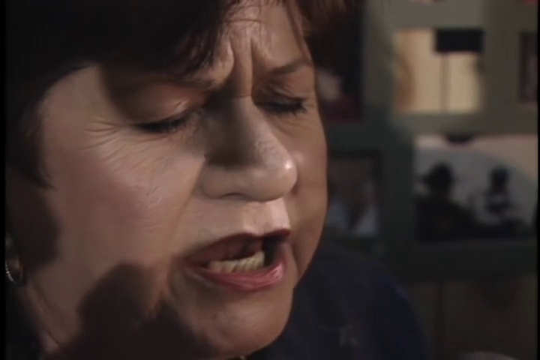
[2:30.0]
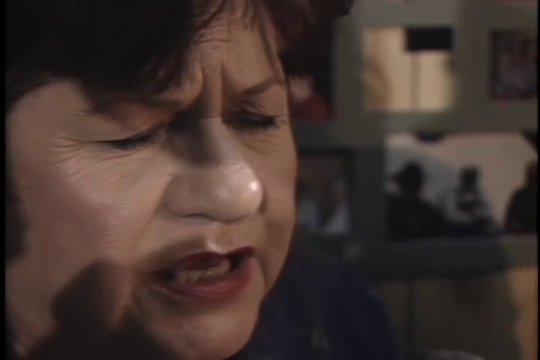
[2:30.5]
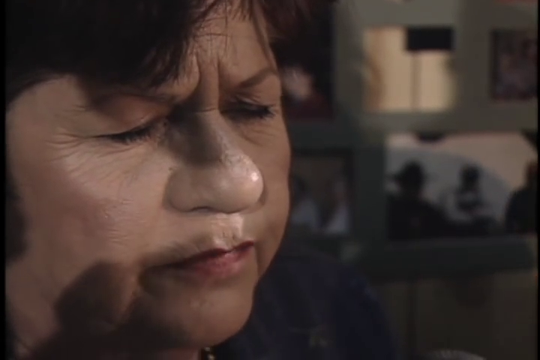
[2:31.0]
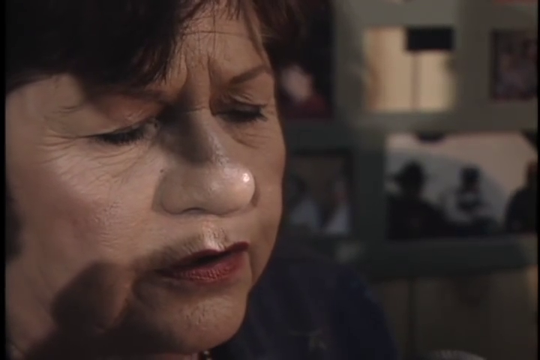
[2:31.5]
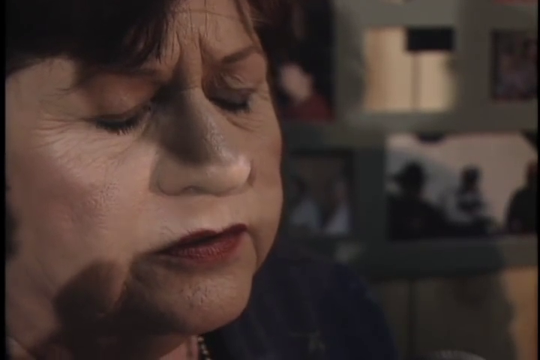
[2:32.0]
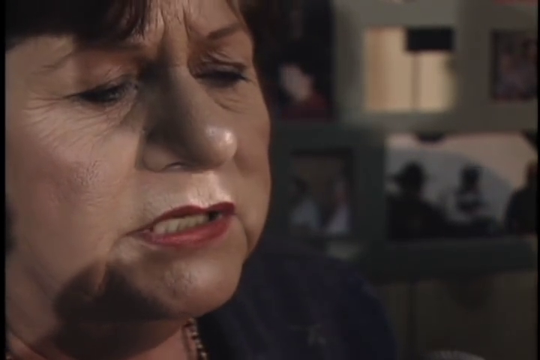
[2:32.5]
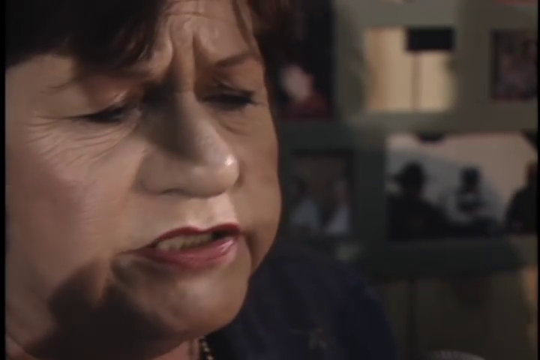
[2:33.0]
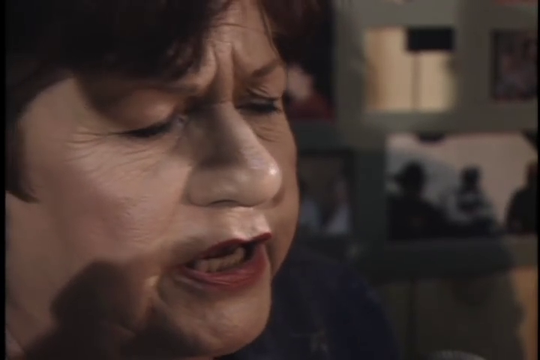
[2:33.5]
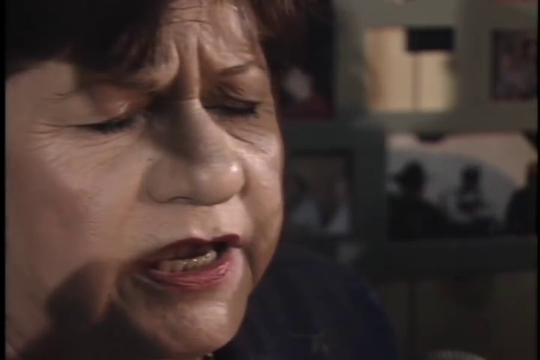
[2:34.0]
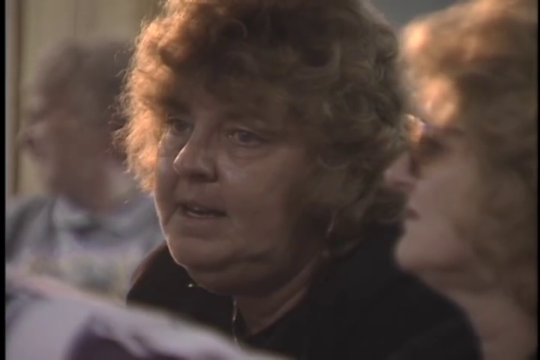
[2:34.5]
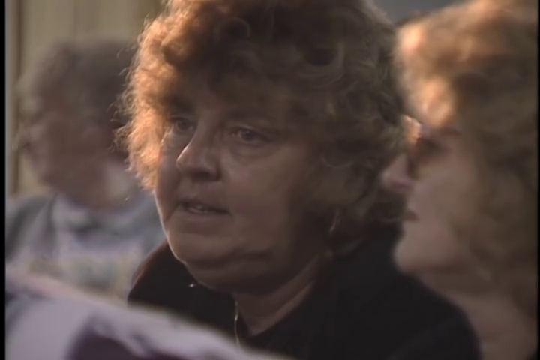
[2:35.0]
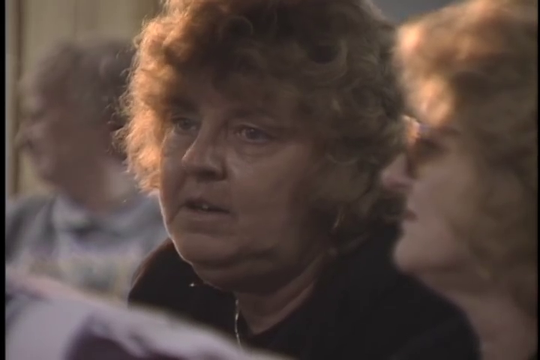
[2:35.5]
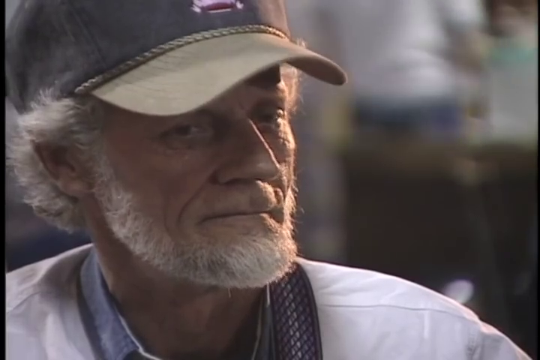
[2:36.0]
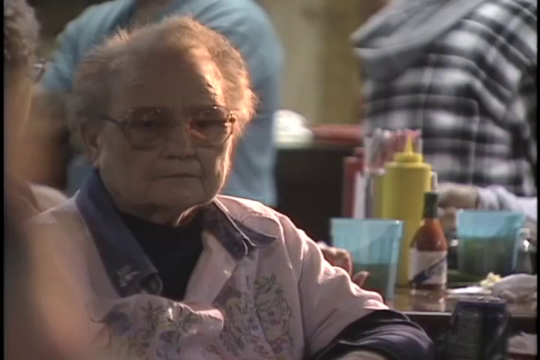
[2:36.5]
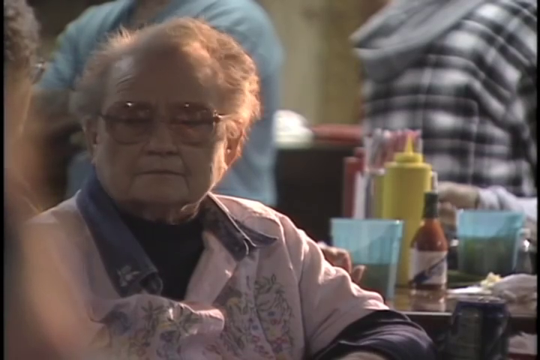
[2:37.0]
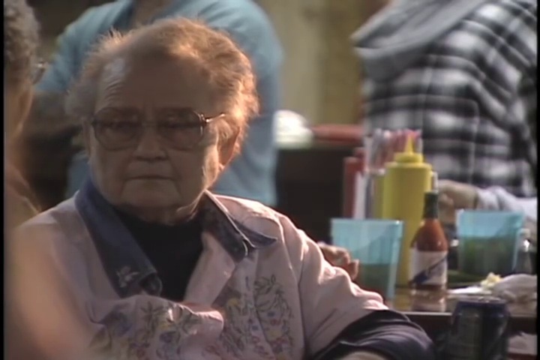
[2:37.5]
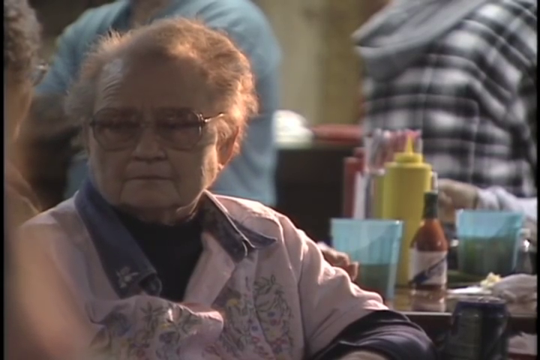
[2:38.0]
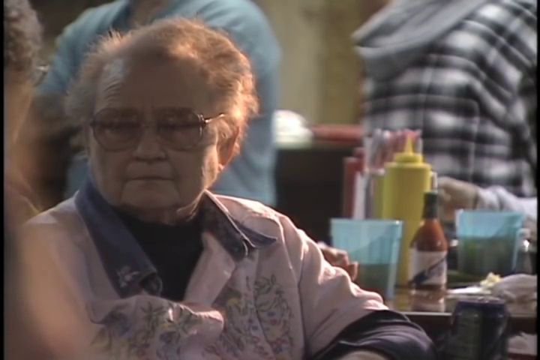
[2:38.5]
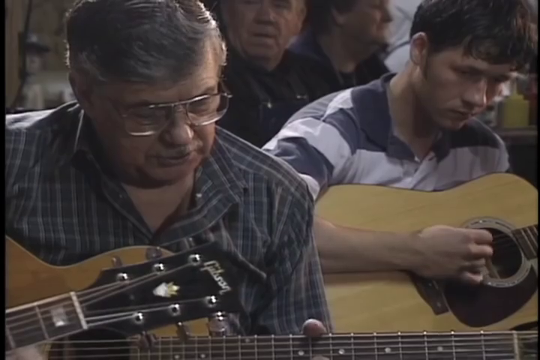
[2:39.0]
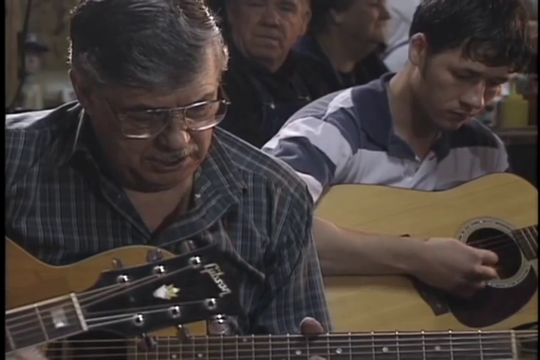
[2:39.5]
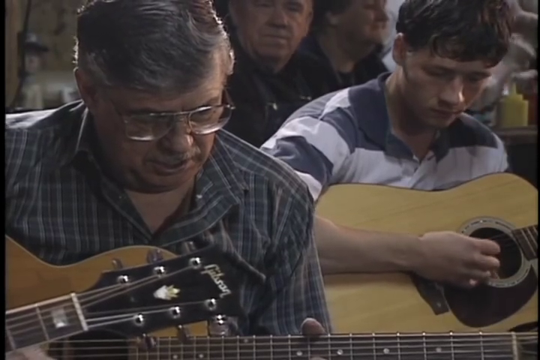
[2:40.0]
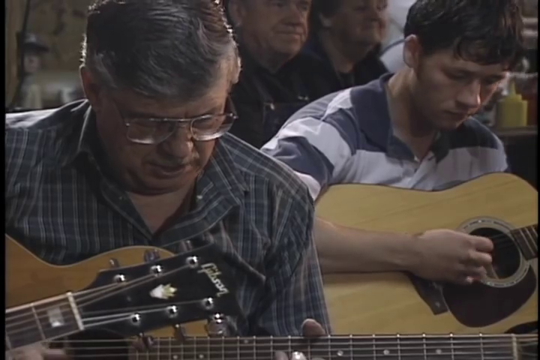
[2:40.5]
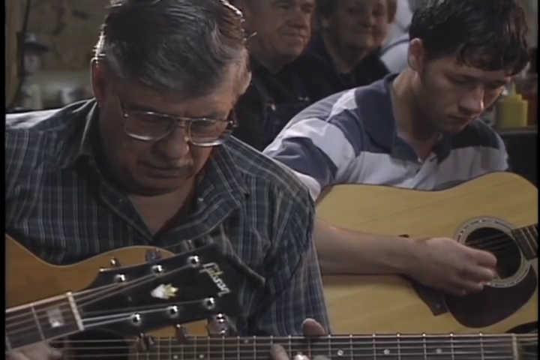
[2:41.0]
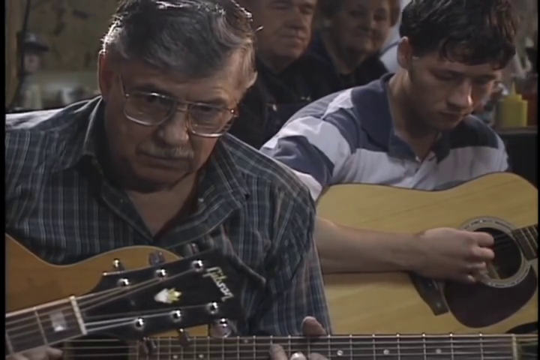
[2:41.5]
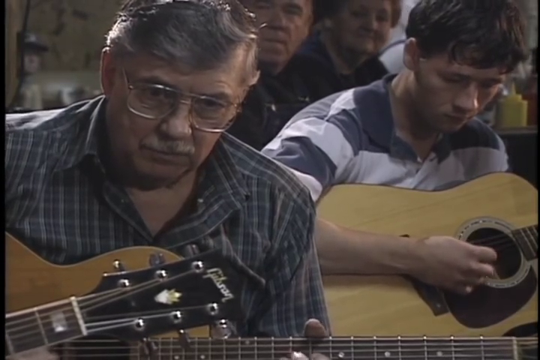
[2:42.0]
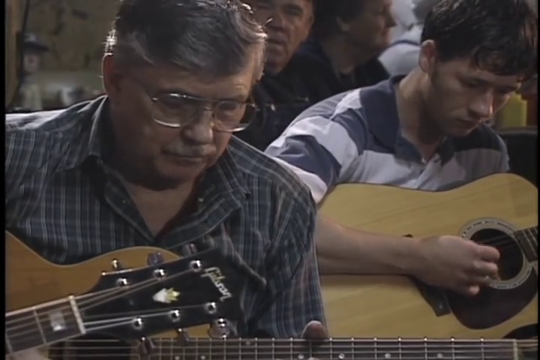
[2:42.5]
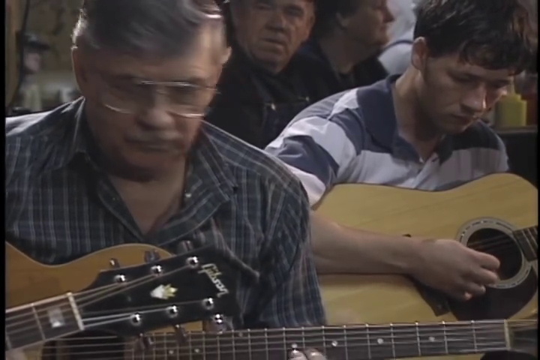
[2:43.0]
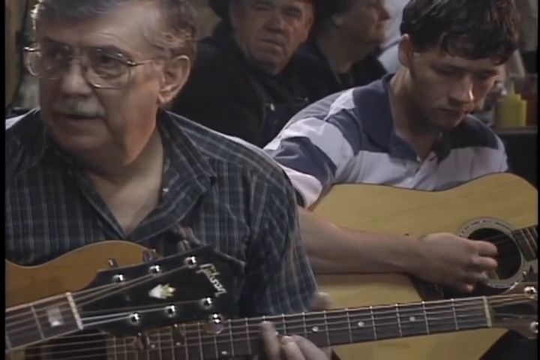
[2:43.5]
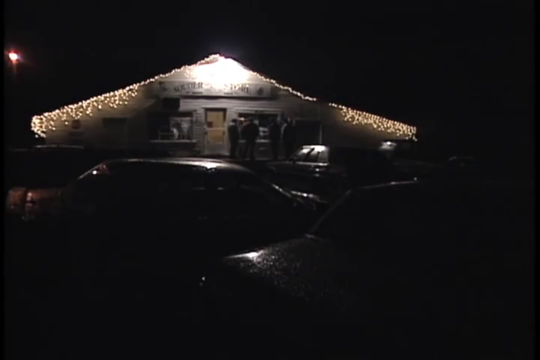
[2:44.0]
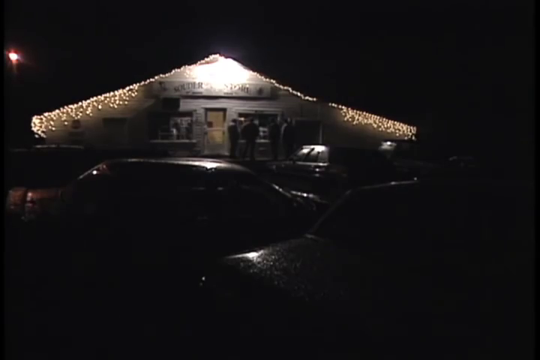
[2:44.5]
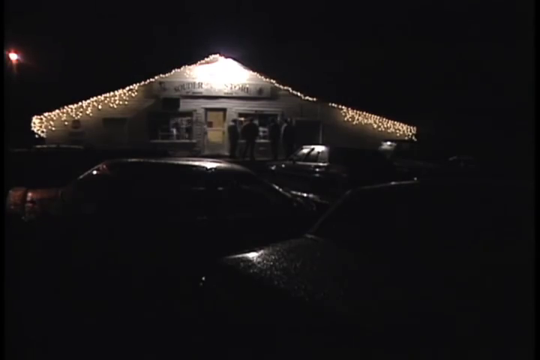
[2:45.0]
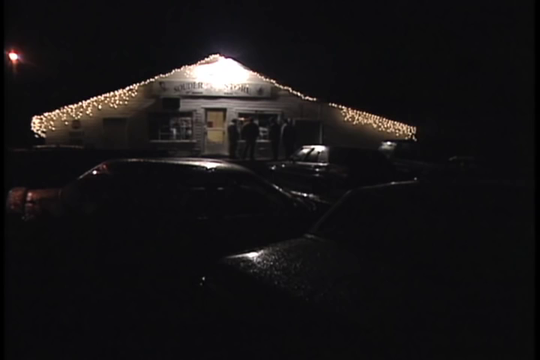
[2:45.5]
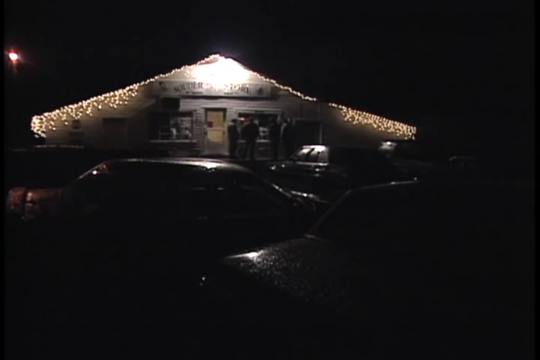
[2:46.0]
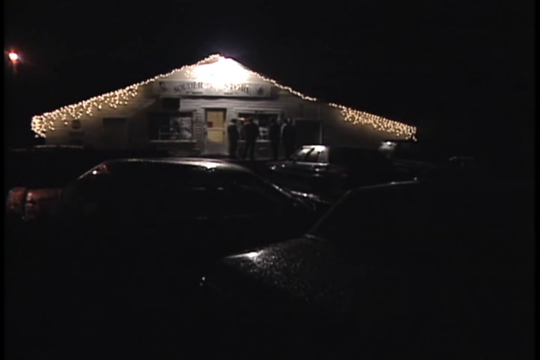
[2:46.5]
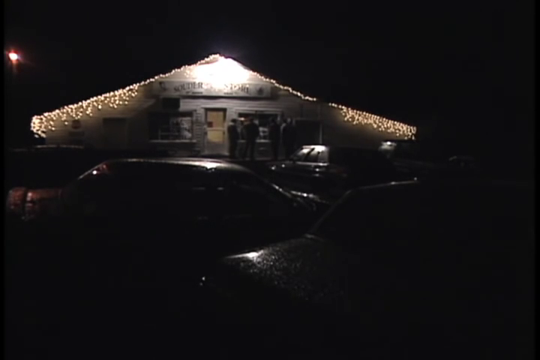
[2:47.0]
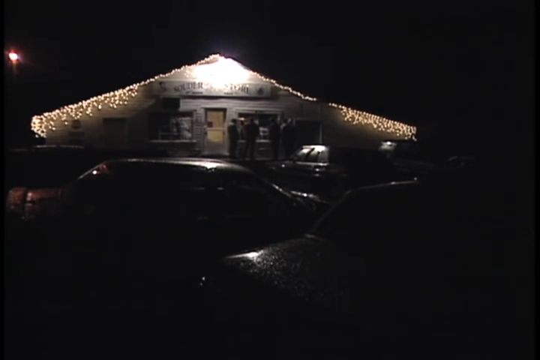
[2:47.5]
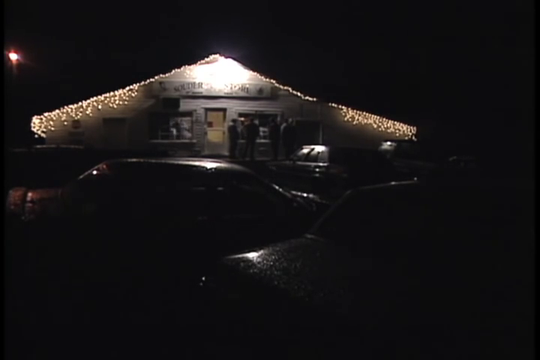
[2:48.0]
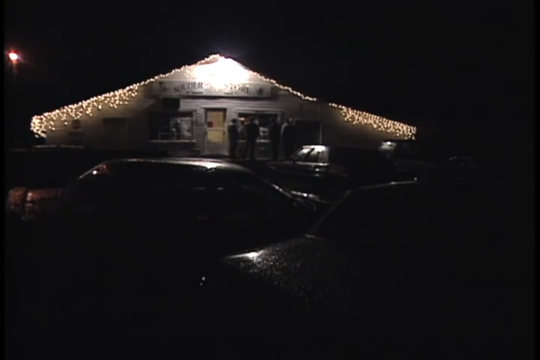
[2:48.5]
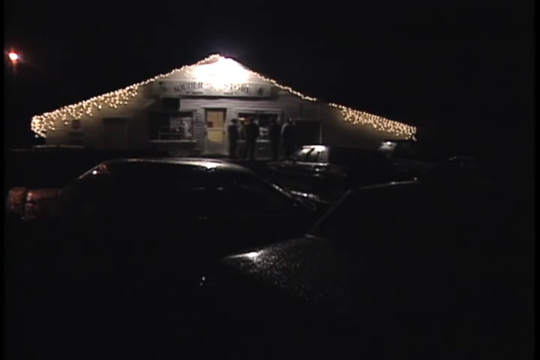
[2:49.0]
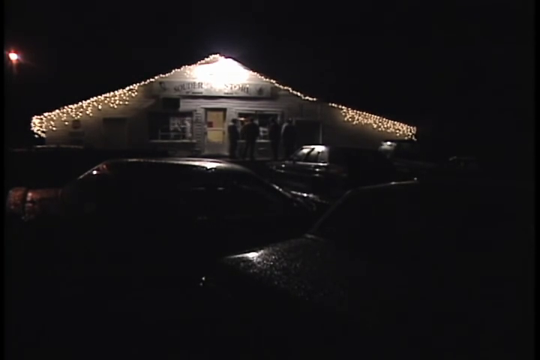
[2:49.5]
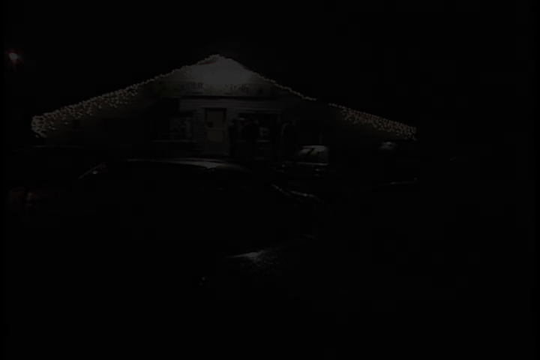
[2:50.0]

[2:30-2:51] A woman with dark hair, perhaps light foundation, and lipstick is on the left-hand side of the screen, her mouth open so her bottom row of teeth is visible. She is not young, maybe in her 60s, and sings with her eyes closed, her head nodding and moving at times. The shot moves to an audience member who appears to be singing along, then to a man in a peaked cap with a slim face and a grey beard, then to another woman in the audience watching. Two men are then shown playing: one on the left of the screen in a checked shirt, grey-haired with glasses, and one on the right, dark-haired and much younger, in a hooped shirt. Finally, the outside of the premises is shown at night: the screen is generally dark in the background and foreground, with some reflections of light in the middle of the frame a little above the bottom, and slightly to the left and right. A light shines above the entrance, the sloping roof is visible and lit, and the front of the premises, including the doorway and windows, is largely lit. The video ends with this shot.